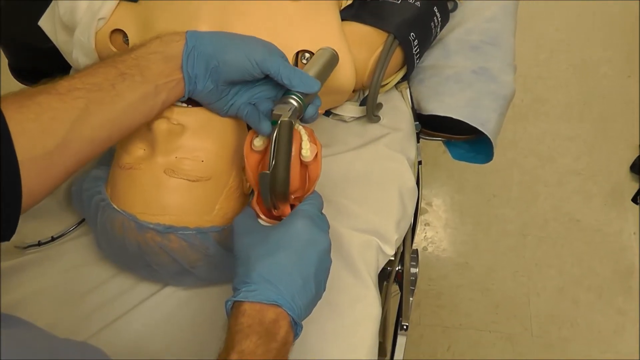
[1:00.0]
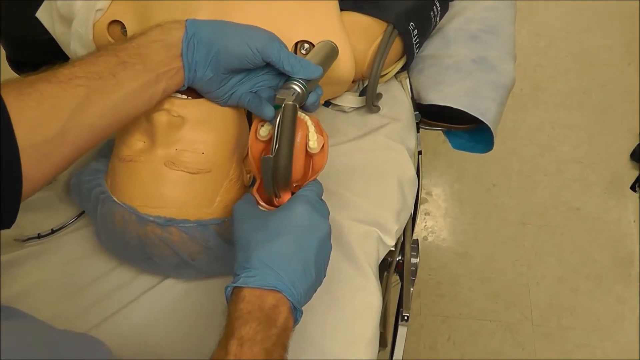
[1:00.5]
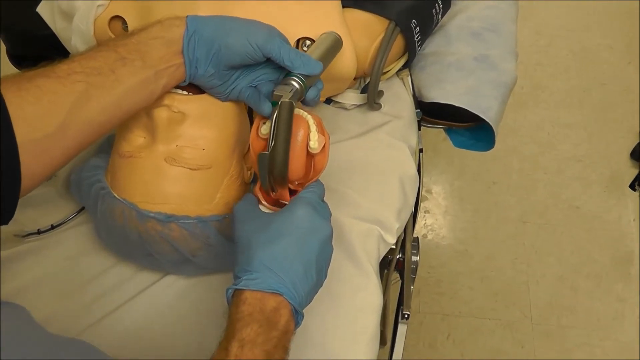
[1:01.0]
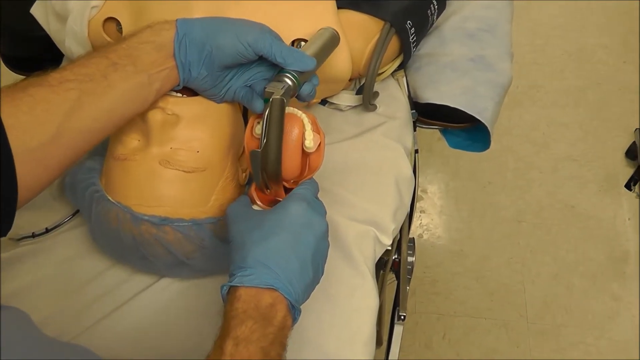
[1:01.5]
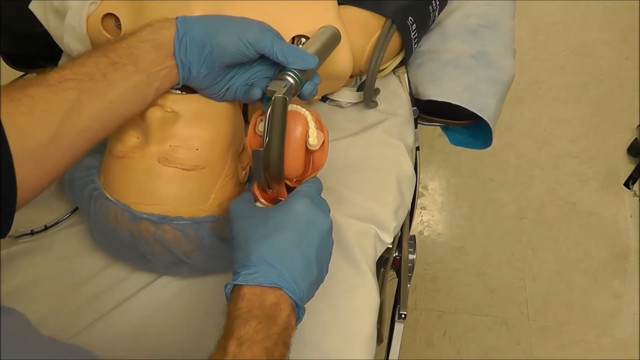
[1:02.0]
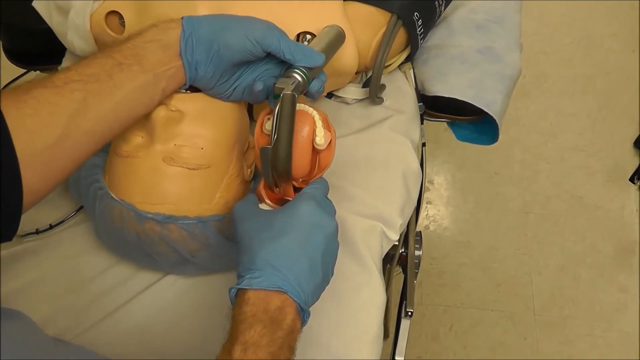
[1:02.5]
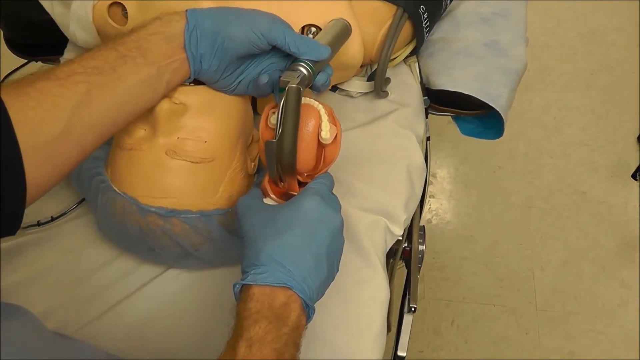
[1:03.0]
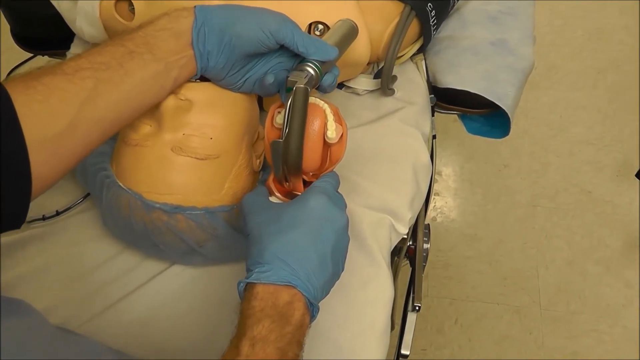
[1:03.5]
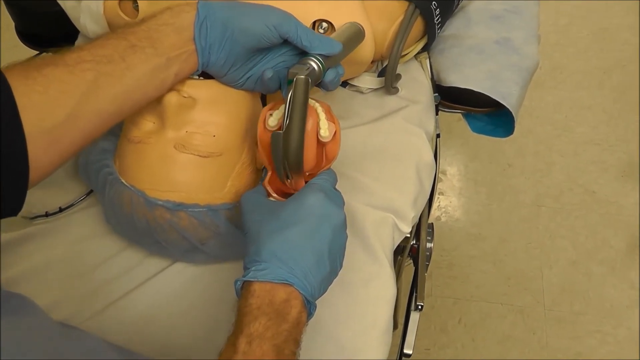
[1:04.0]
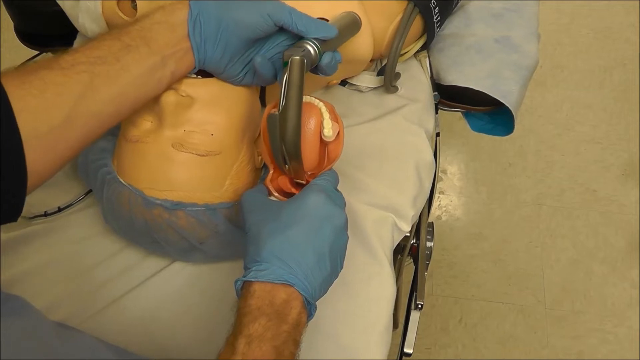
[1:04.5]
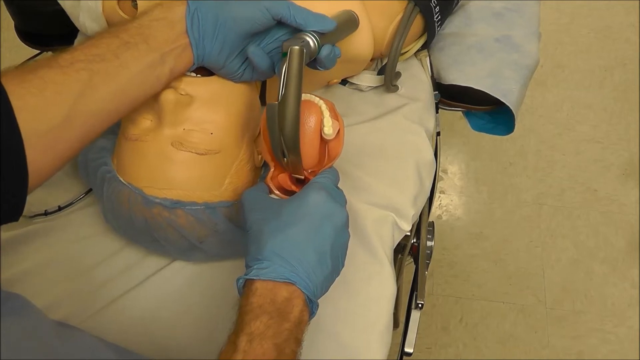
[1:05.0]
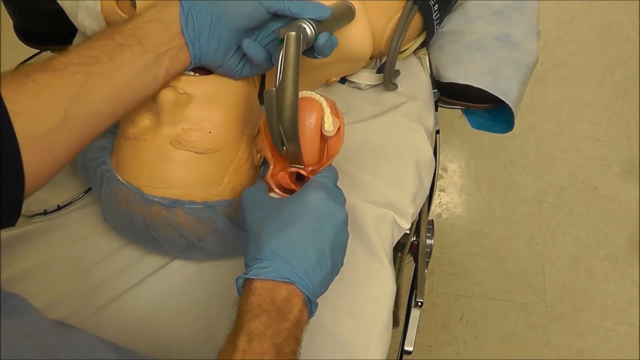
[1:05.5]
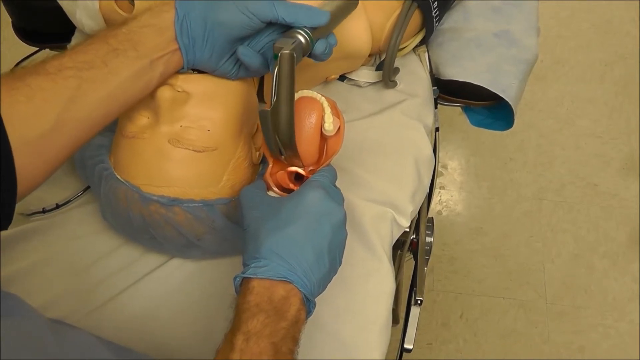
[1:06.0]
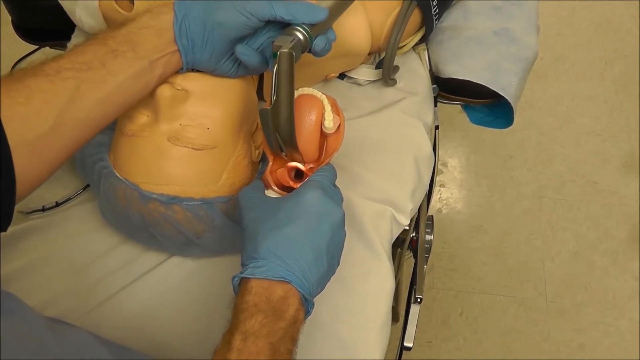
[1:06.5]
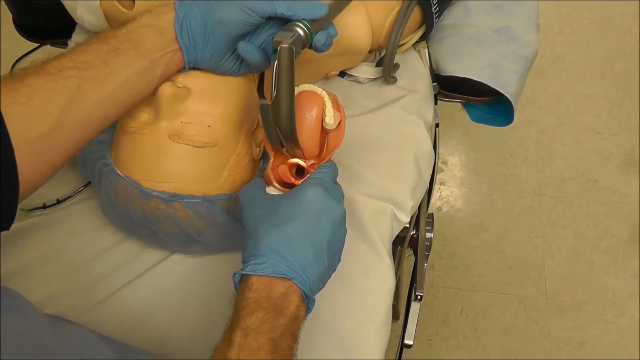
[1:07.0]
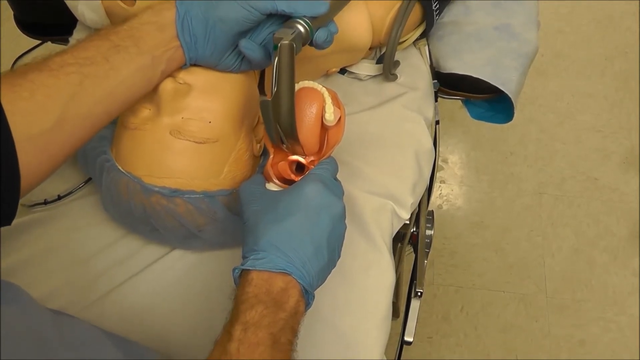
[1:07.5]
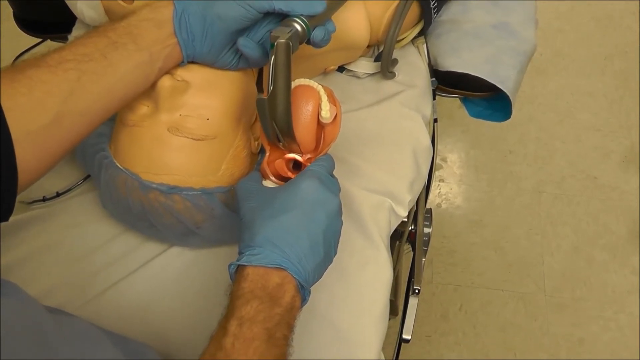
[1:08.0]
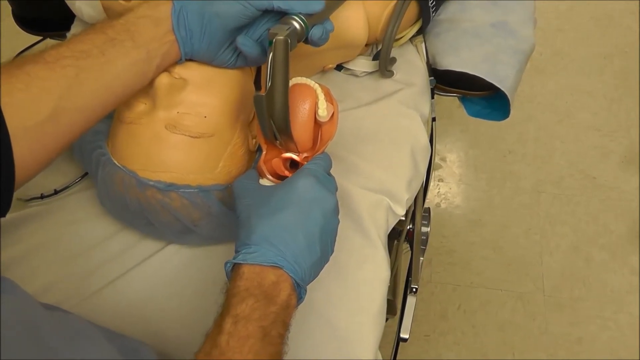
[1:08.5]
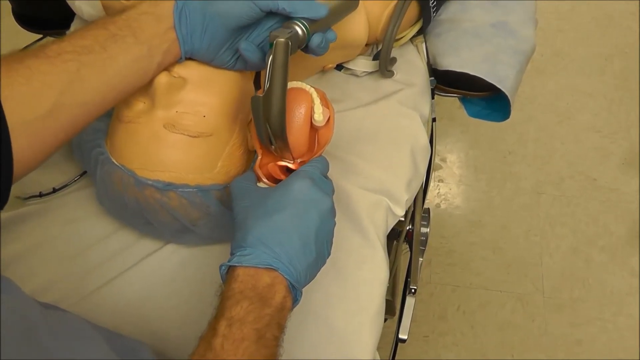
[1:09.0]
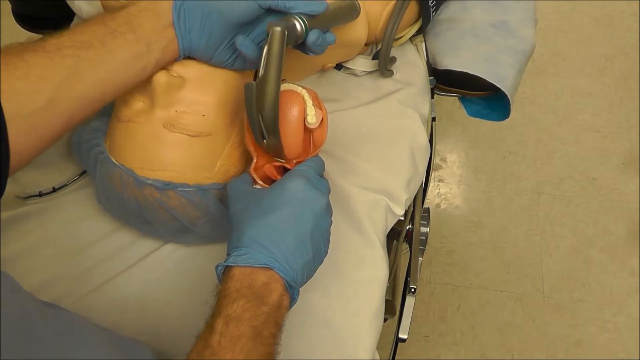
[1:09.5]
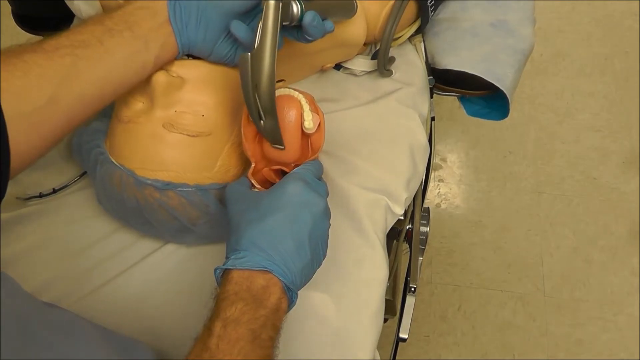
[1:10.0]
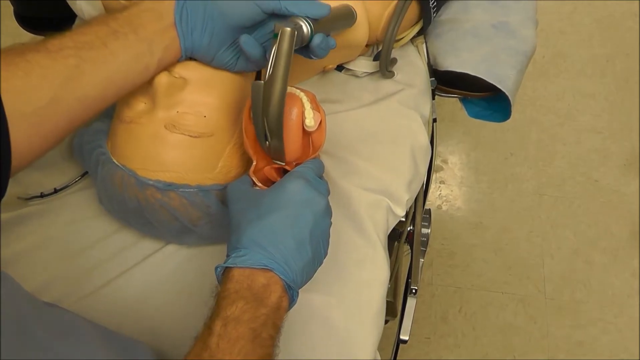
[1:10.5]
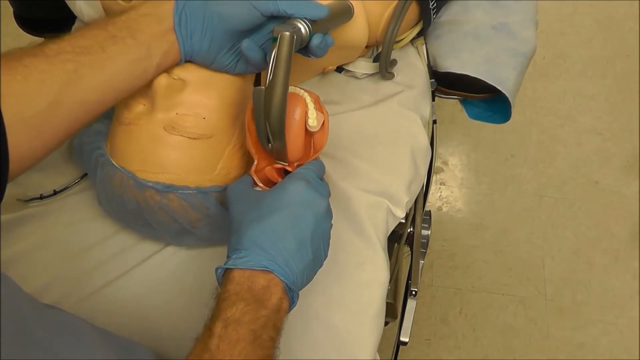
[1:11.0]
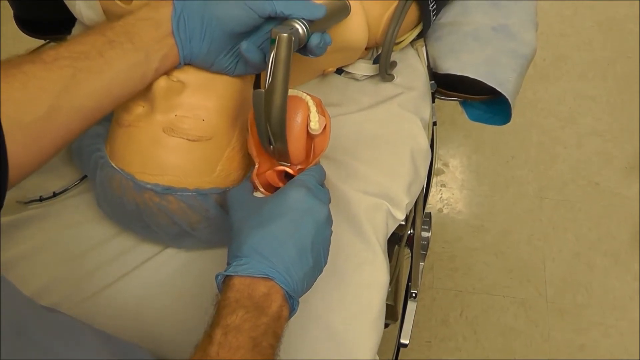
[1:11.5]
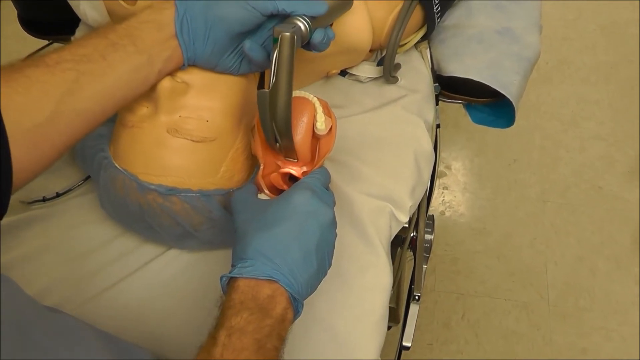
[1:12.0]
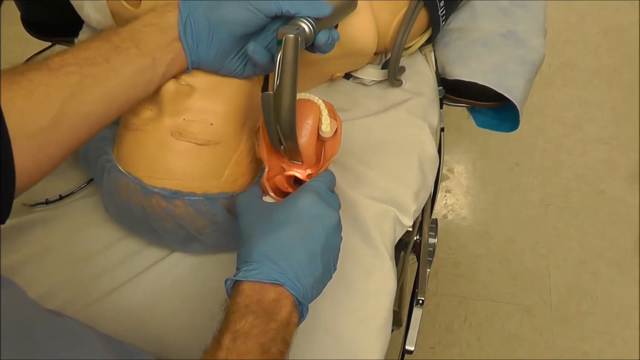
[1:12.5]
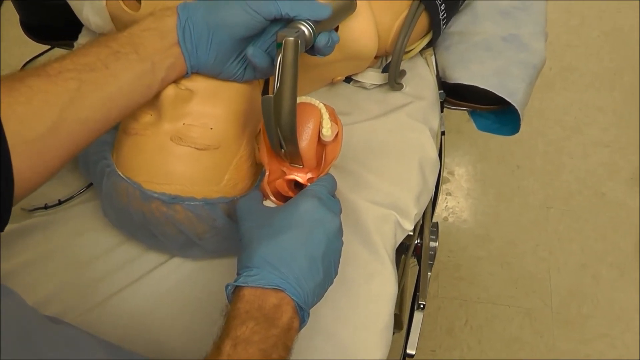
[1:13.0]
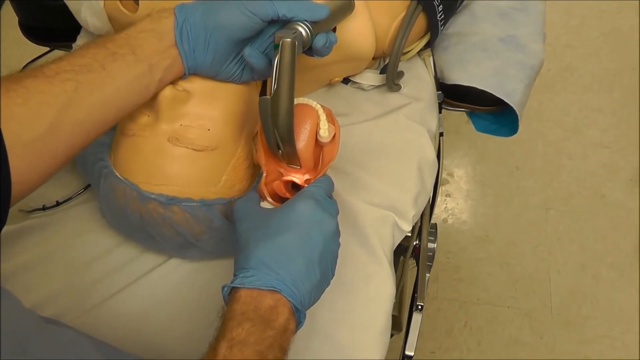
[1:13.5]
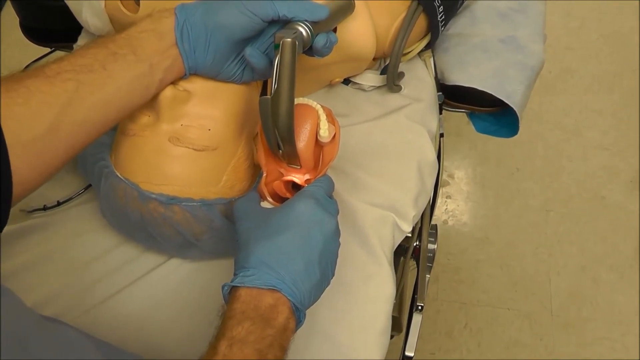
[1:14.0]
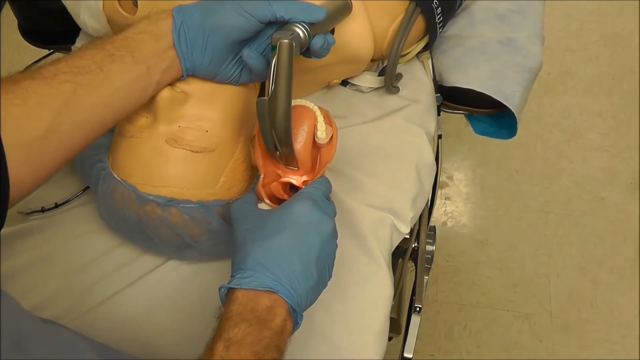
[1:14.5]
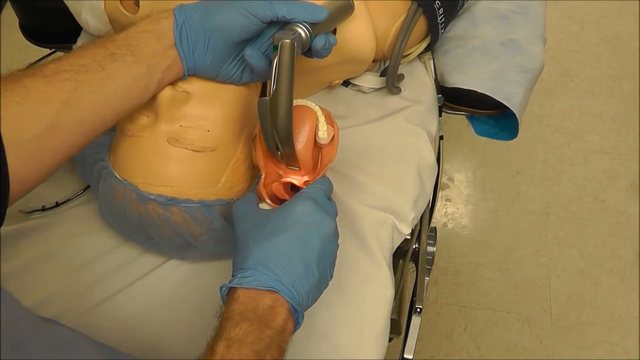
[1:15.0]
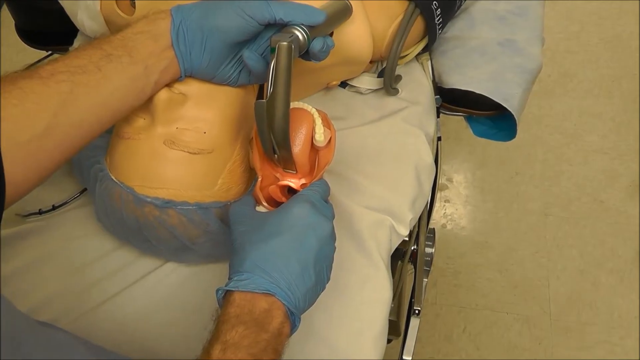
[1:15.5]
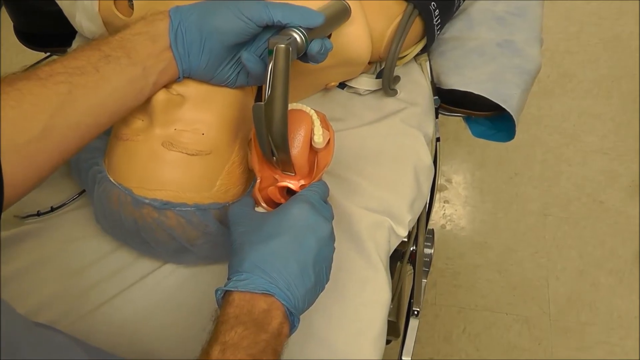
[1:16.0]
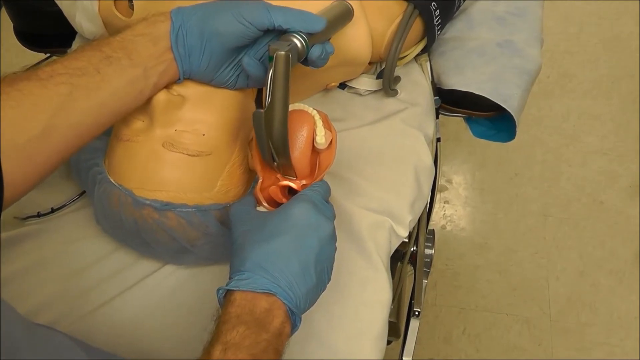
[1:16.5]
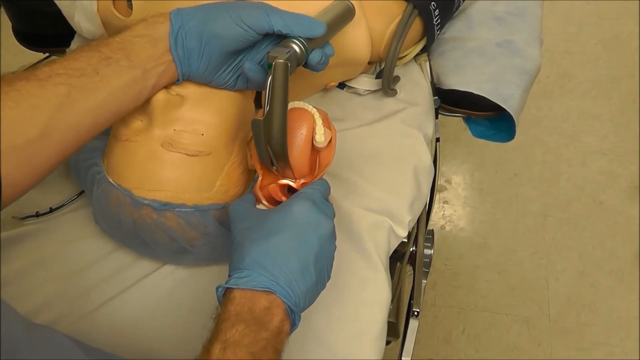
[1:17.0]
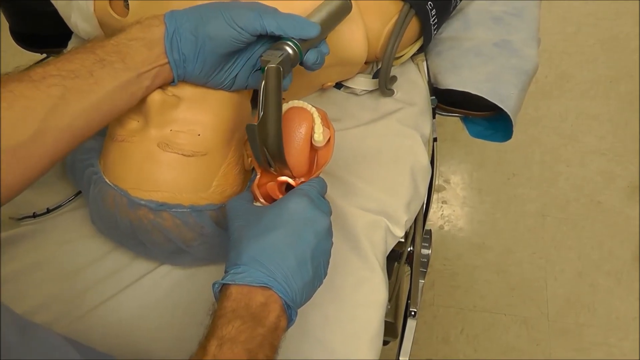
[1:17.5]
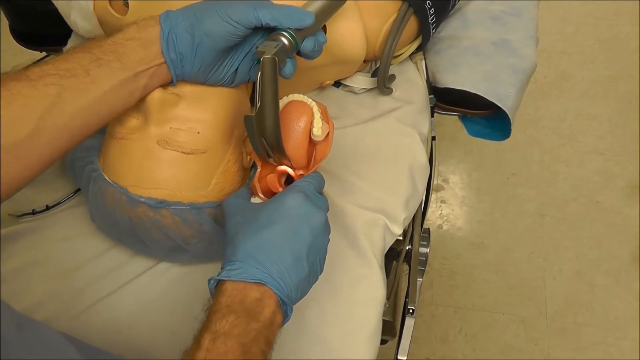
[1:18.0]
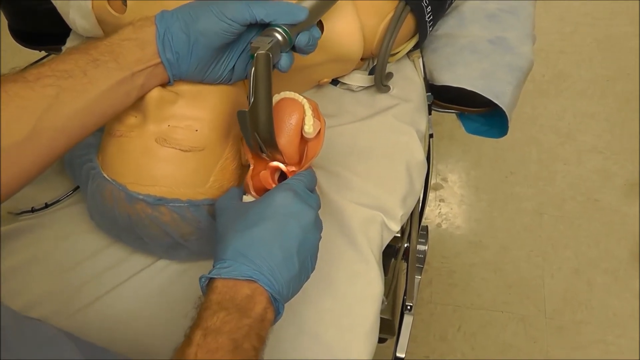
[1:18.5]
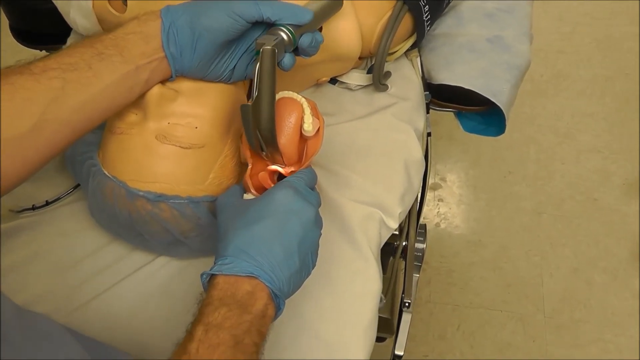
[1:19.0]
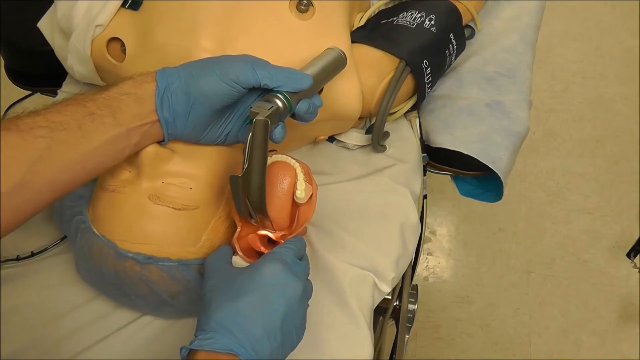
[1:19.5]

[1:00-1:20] The dummy lies on the gurney with its mouth open and eyes closed, and a model of the mouth is next to it. The person, wearing blue rubber medical gloves, inserts the intubation instrument into the model of the mouth, showing how it goes over the tongue and pulls the tongue forward to go into the throat. The instrument is inserted all the way to the back of the throat, and a light is visible: as he pulls up on the tongue, the light shines to the back of the throat. He keeps the instrument on the right side of the throat. The dummy has a blood pressure cuff attached, and a couple of holes are visible in its chest.